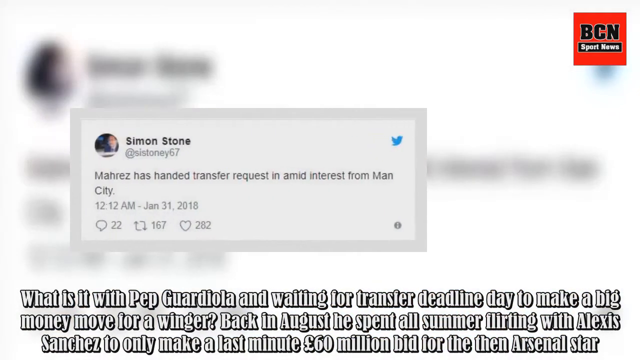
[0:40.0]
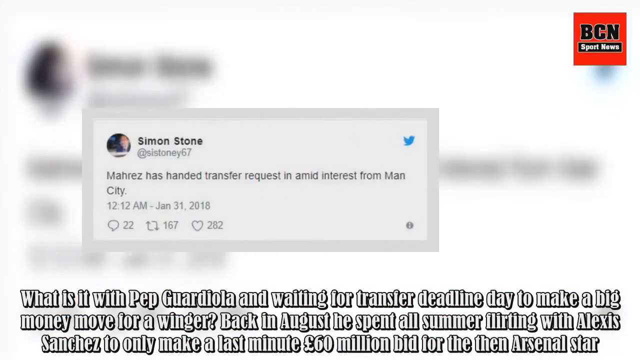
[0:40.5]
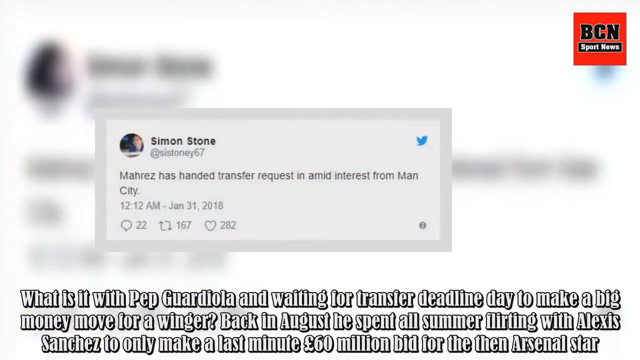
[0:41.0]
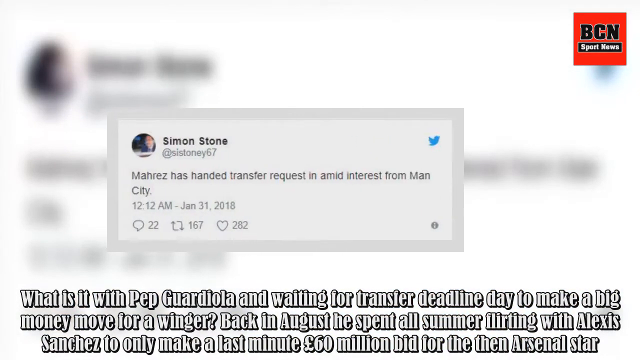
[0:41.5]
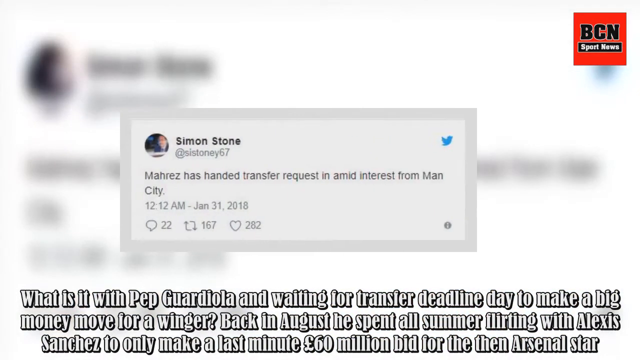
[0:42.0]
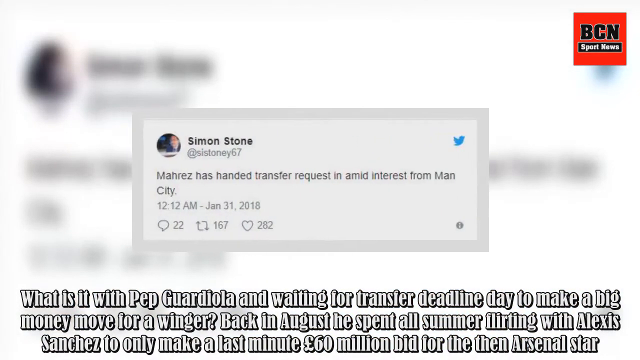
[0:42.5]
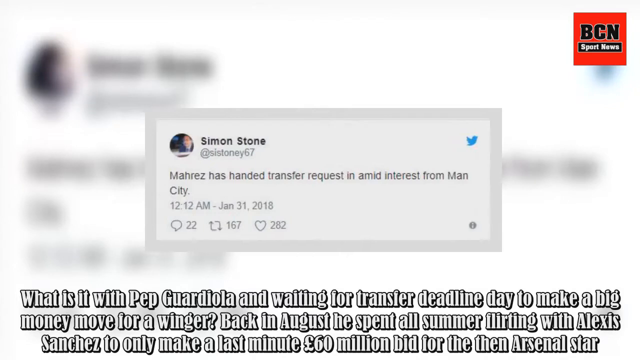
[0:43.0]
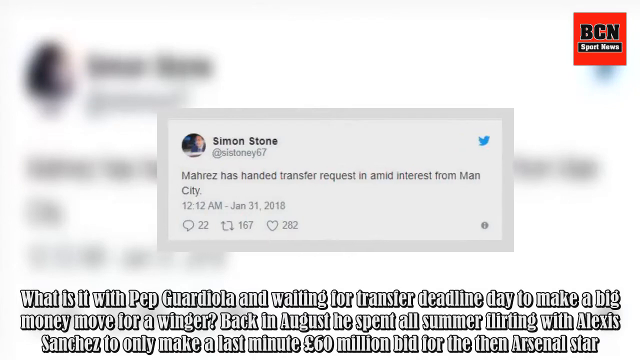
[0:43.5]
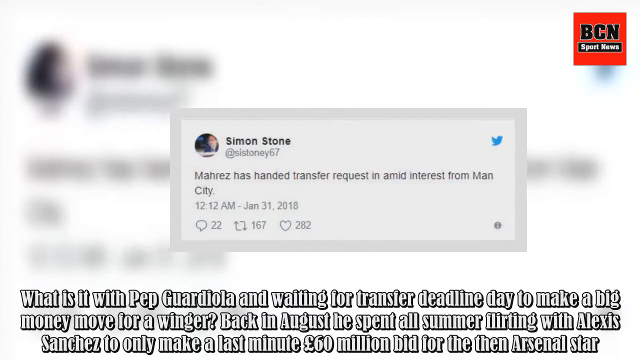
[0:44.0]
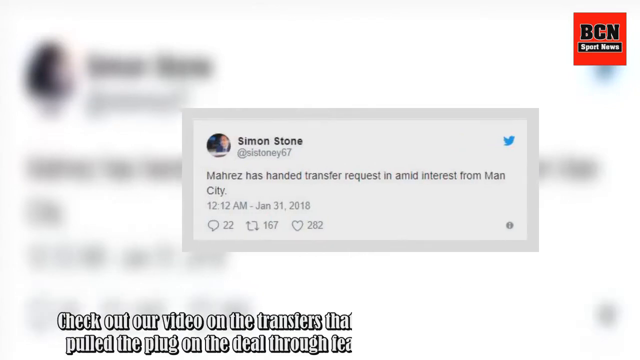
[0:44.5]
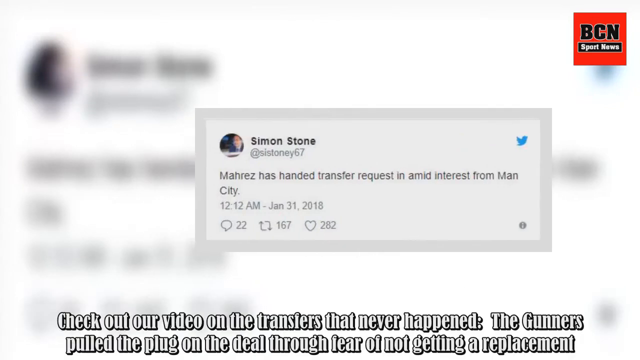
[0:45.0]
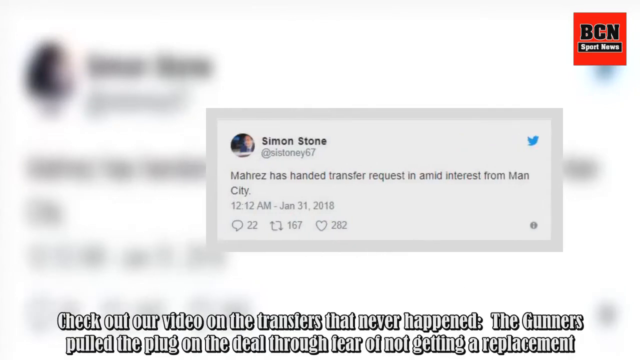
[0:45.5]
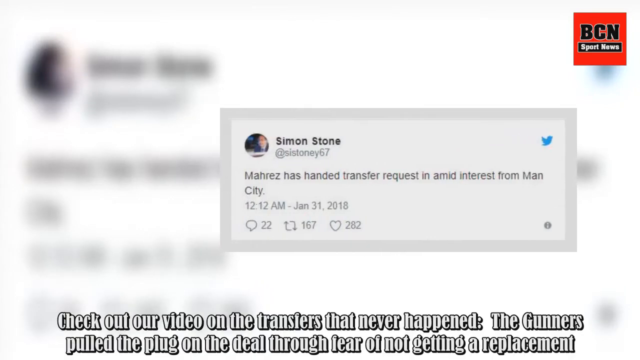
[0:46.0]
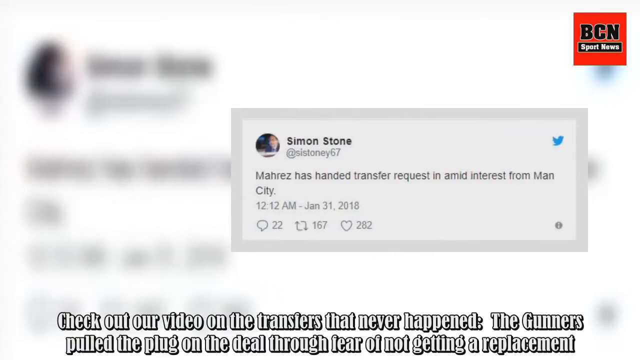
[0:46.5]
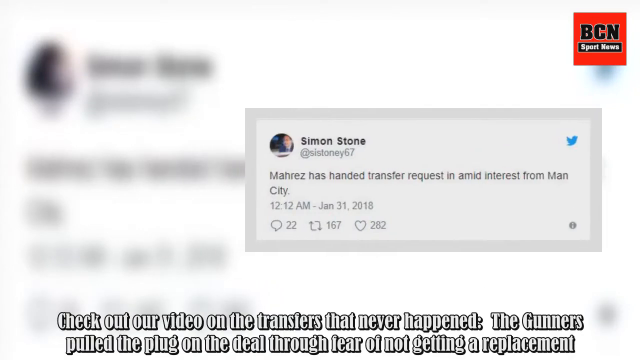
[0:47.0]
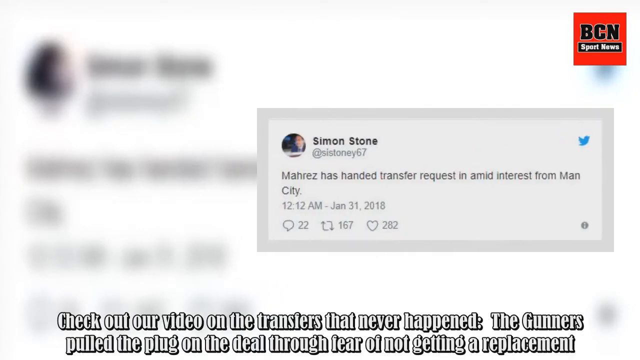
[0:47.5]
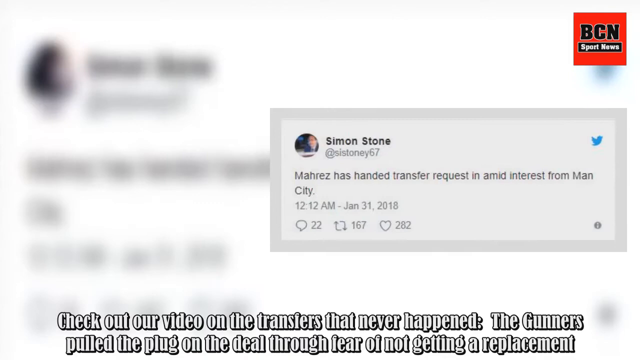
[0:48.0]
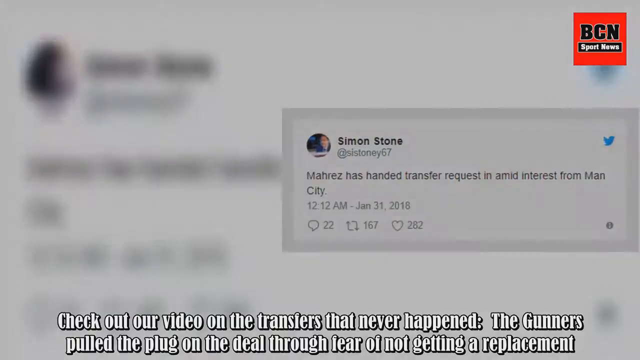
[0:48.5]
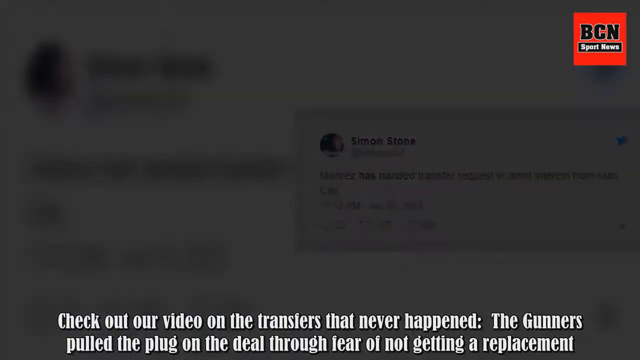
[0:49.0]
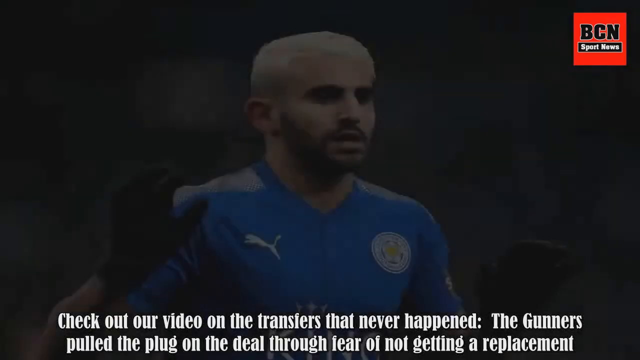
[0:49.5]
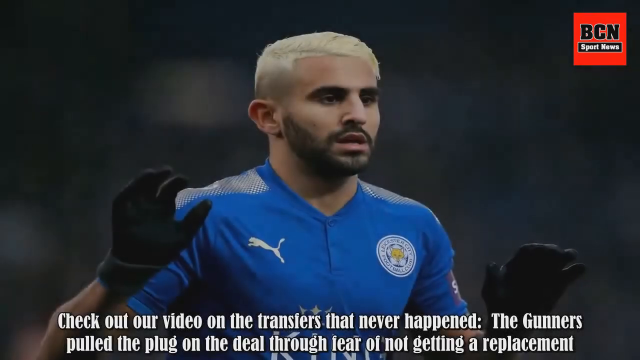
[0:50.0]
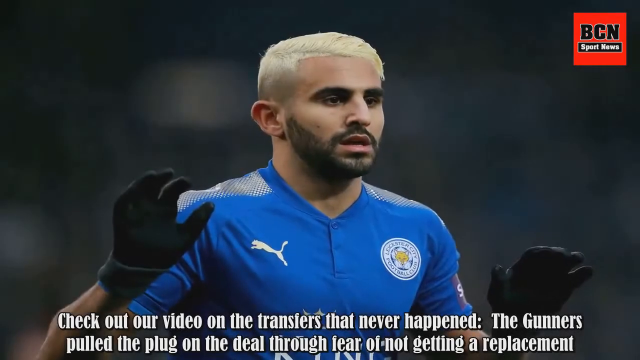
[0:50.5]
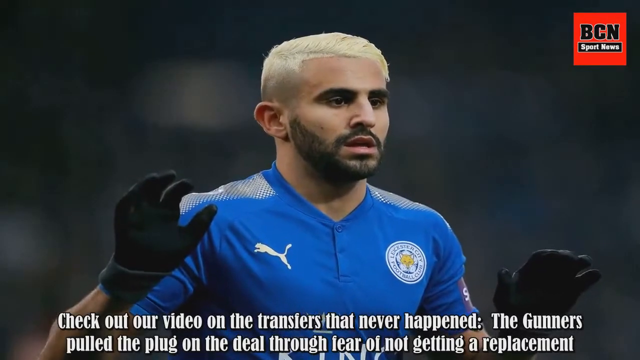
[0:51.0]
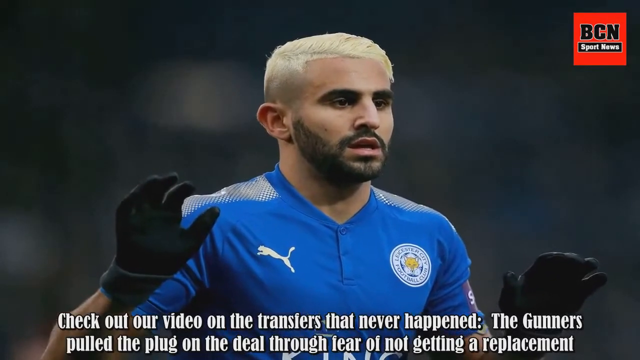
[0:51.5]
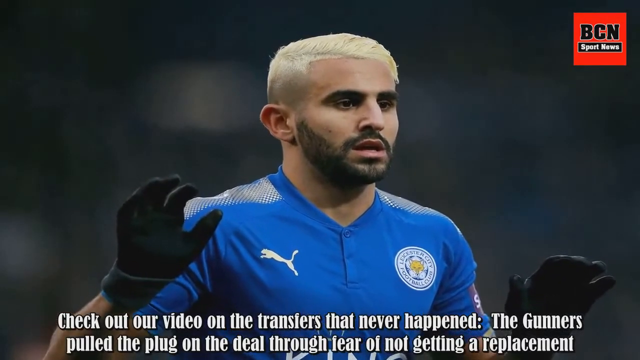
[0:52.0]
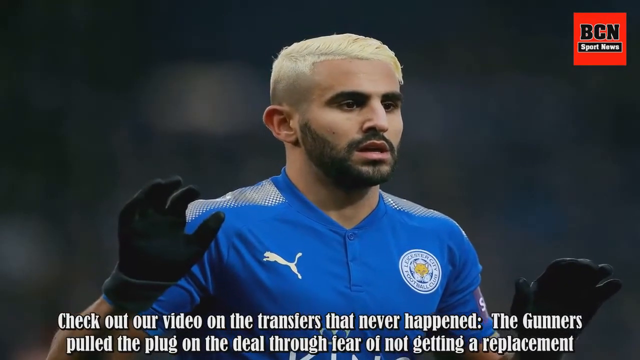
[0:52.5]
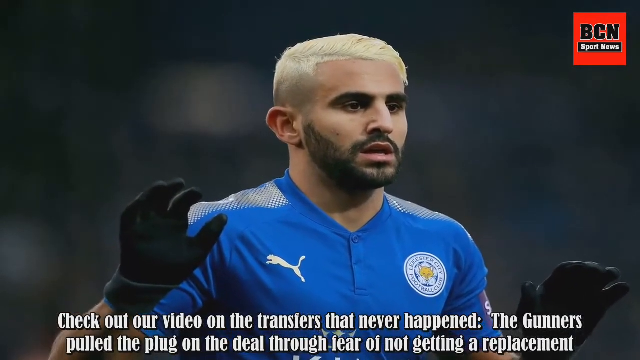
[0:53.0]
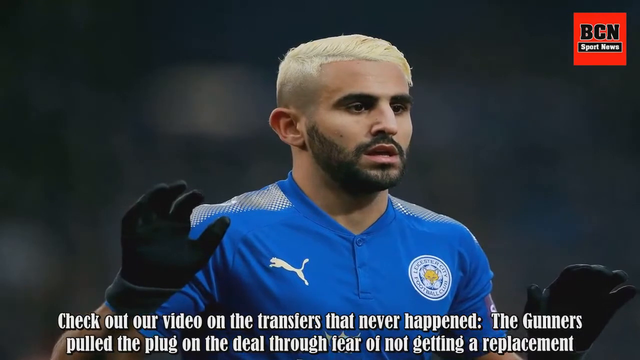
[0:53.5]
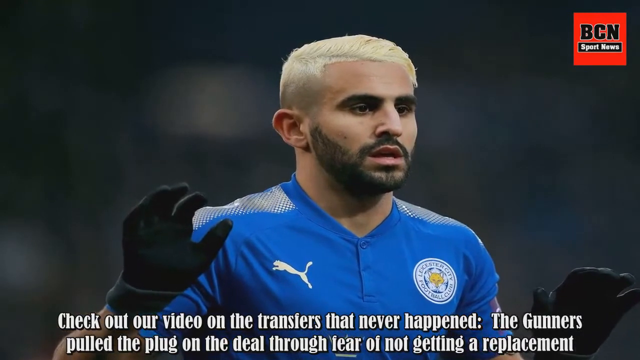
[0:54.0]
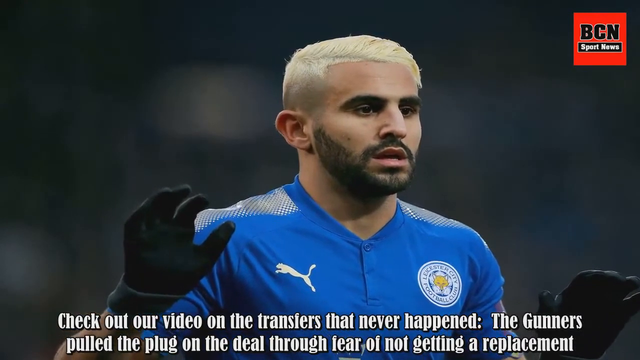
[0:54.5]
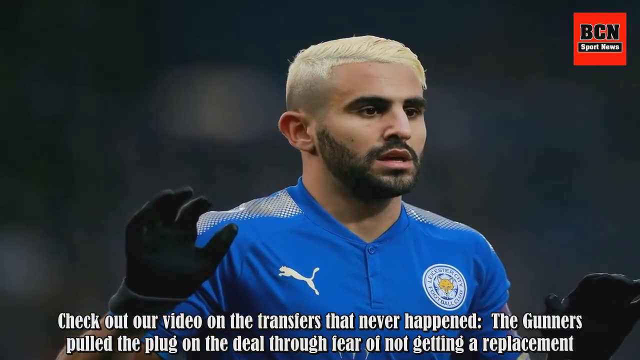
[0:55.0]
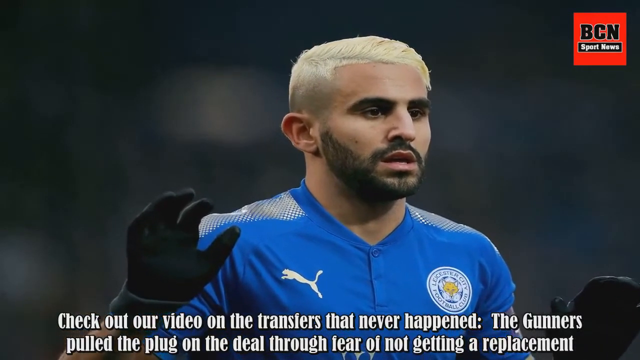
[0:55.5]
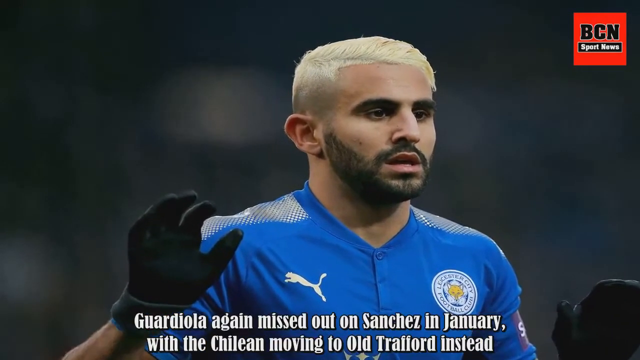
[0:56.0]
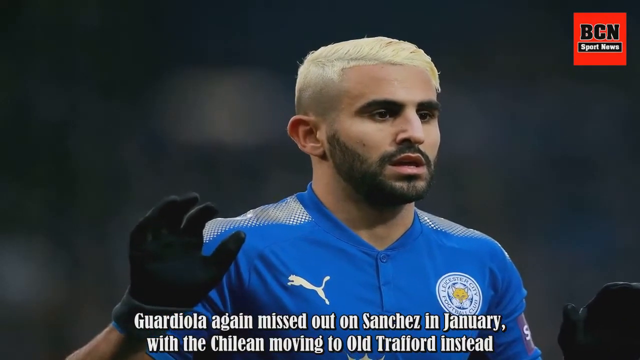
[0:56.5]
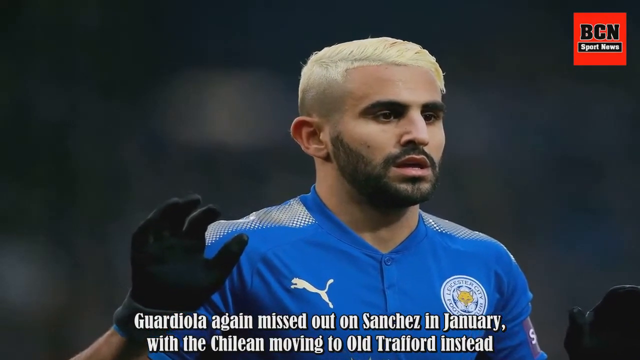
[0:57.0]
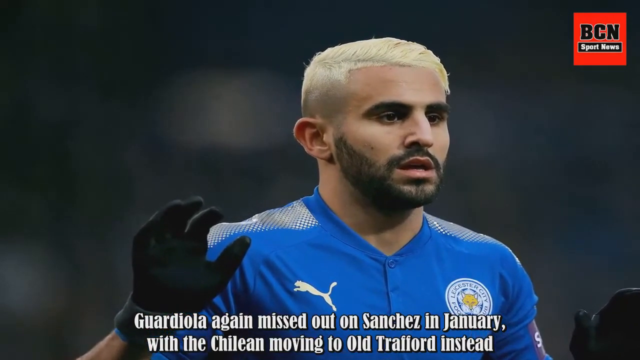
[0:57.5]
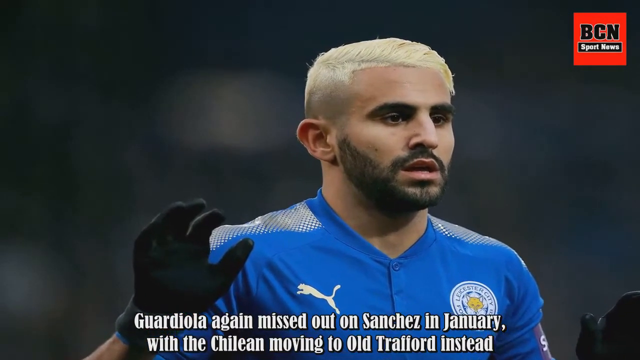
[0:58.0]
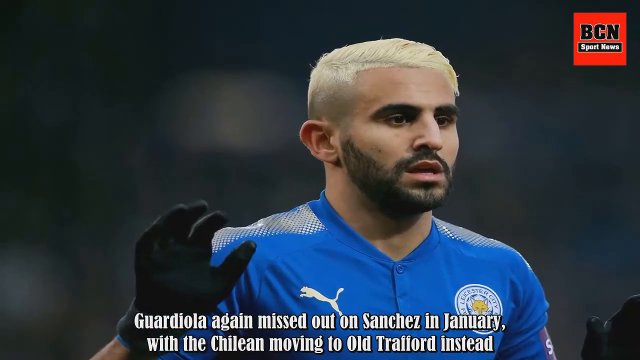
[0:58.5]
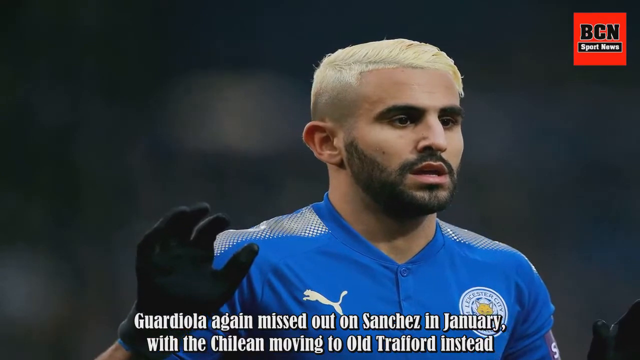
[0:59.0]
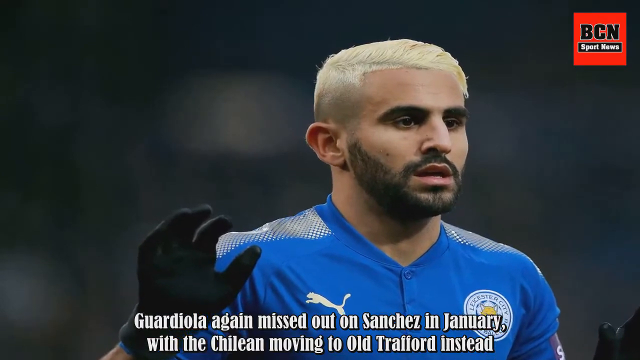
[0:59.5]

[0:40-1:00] A tweet posted by SilentStone is shown, about a transfer request and interest from Man City. White text at the very bottom of the screen includes "transfers that never happened" and "through fear of not getting a replacement." A soccer player with blonde hair and a blue jersey is shown, along with the person SilentStone posting the tweet. The background is very blurry, keeping the focus on the central image.